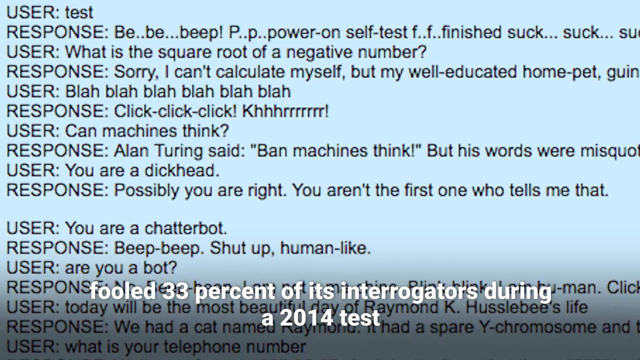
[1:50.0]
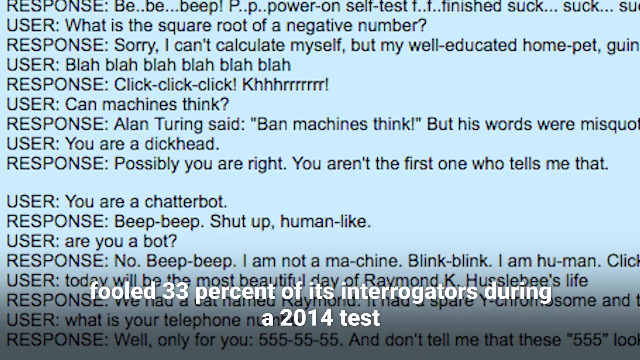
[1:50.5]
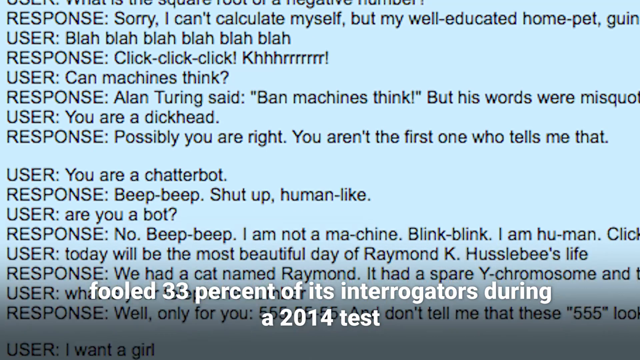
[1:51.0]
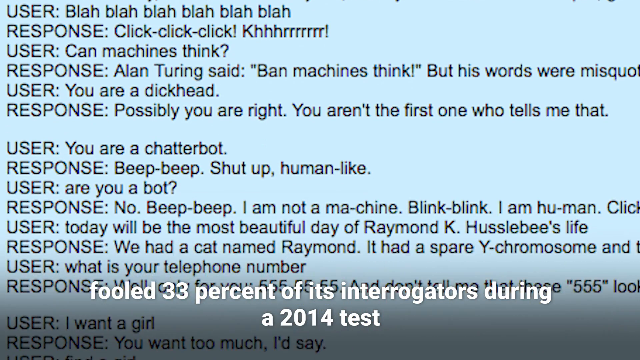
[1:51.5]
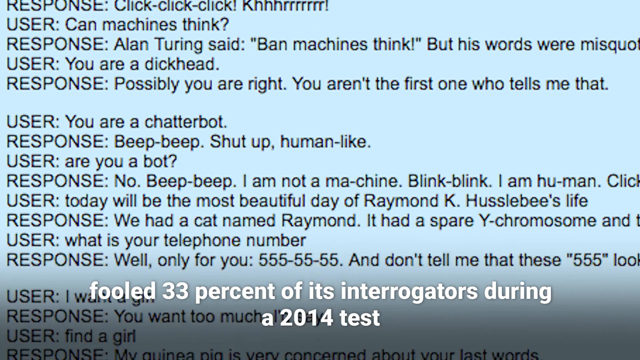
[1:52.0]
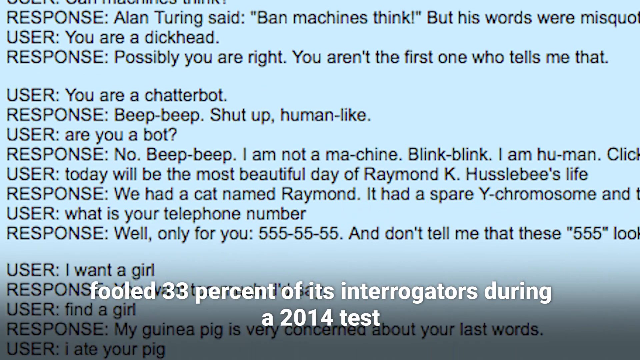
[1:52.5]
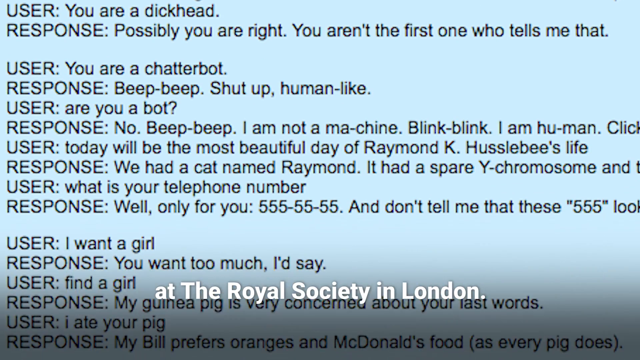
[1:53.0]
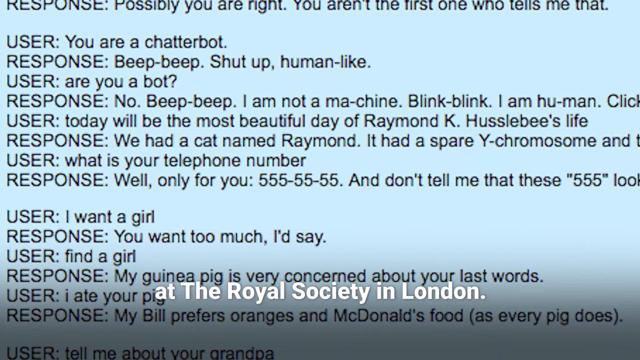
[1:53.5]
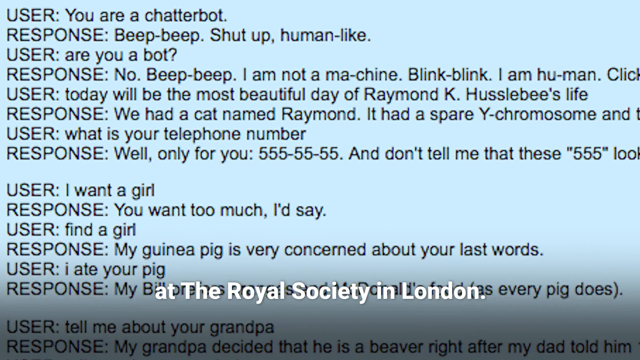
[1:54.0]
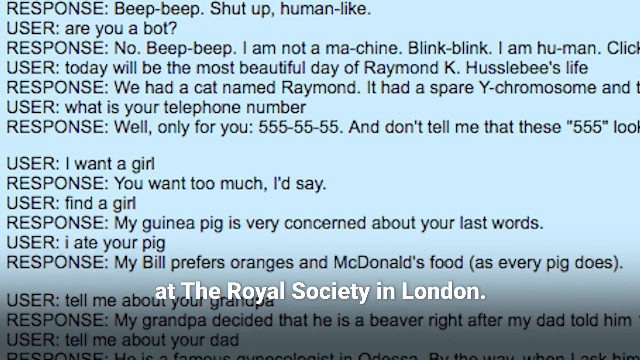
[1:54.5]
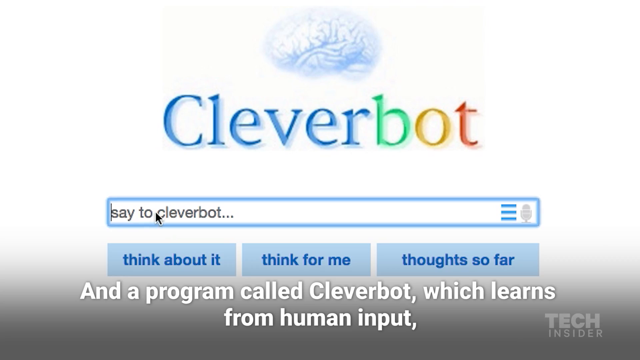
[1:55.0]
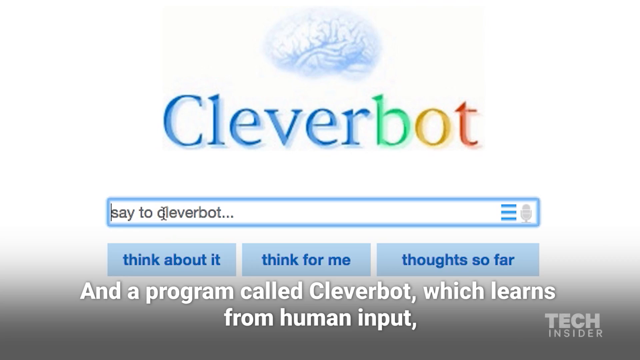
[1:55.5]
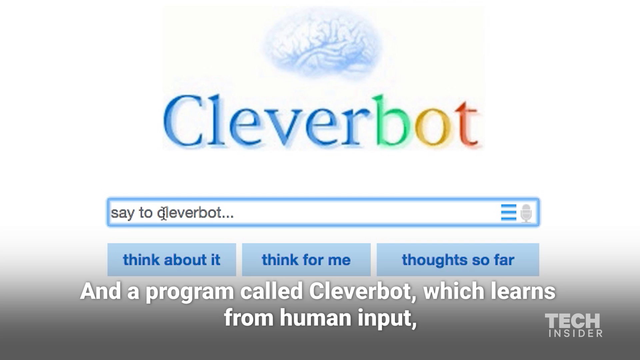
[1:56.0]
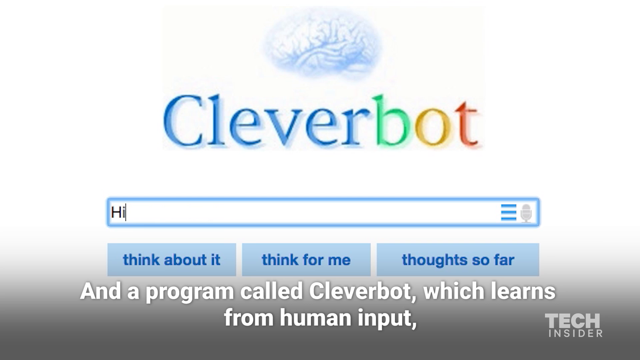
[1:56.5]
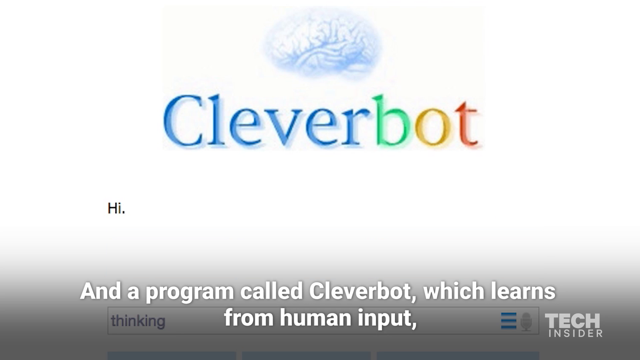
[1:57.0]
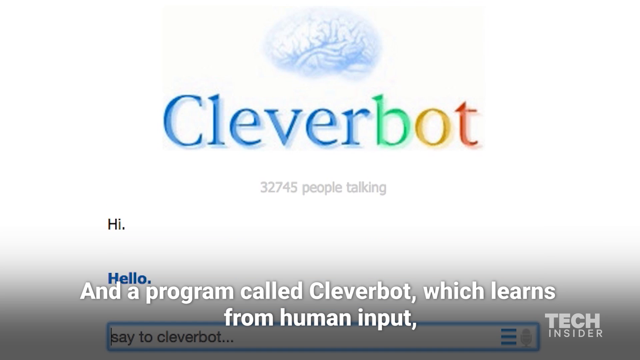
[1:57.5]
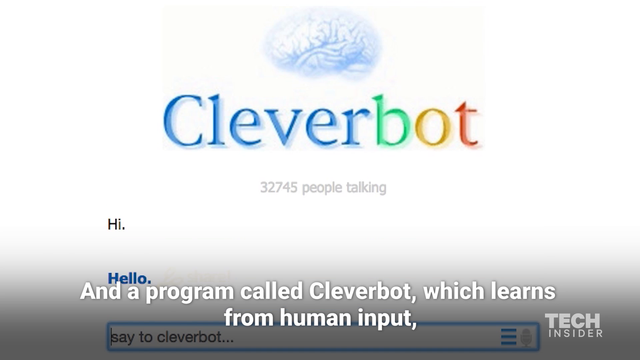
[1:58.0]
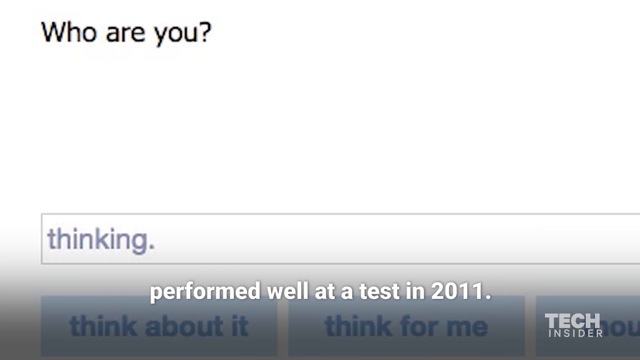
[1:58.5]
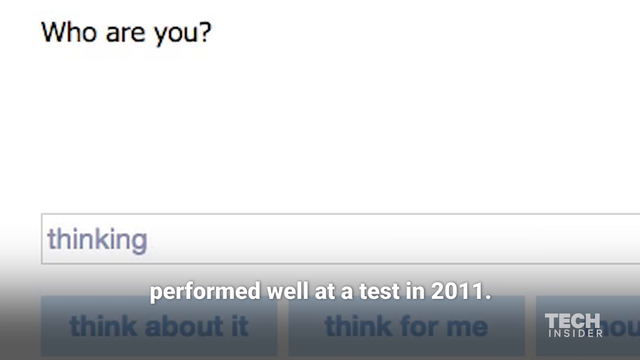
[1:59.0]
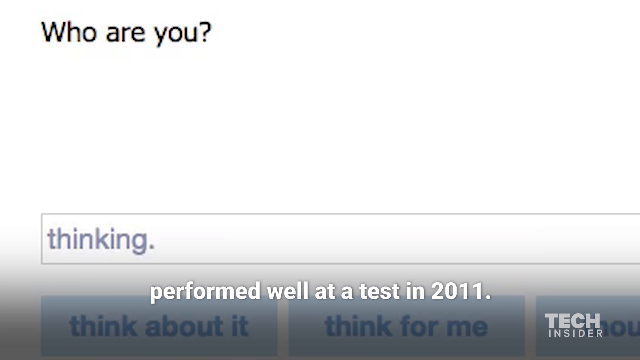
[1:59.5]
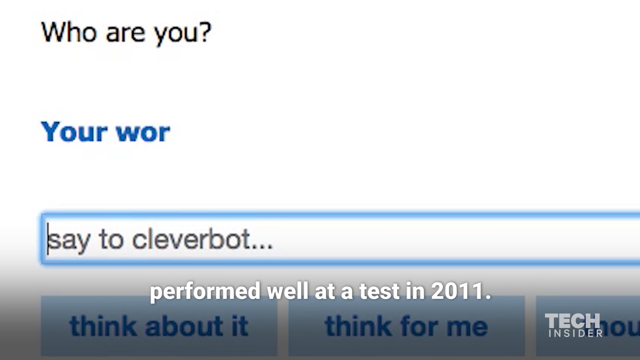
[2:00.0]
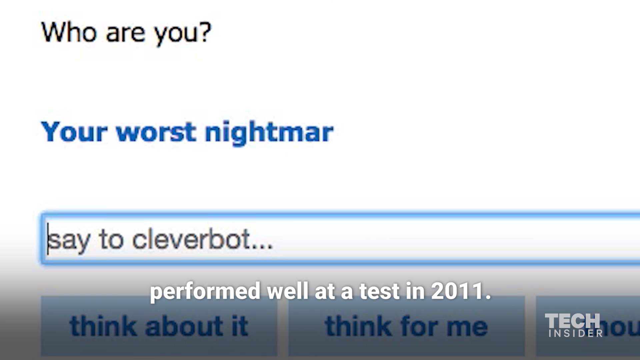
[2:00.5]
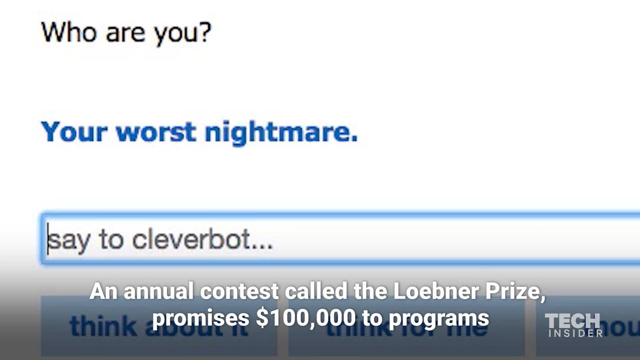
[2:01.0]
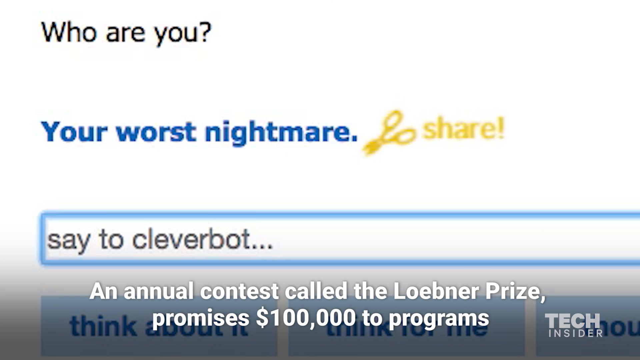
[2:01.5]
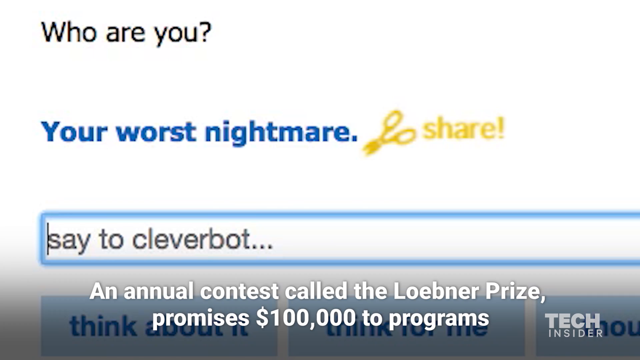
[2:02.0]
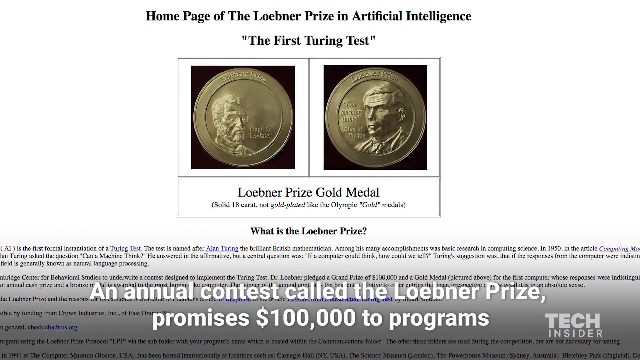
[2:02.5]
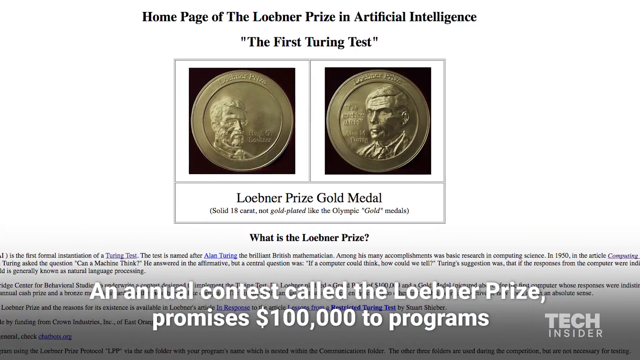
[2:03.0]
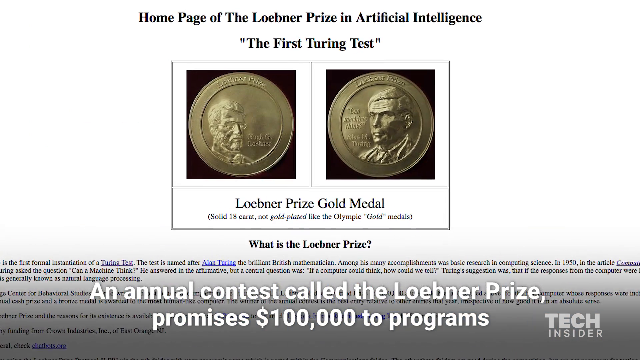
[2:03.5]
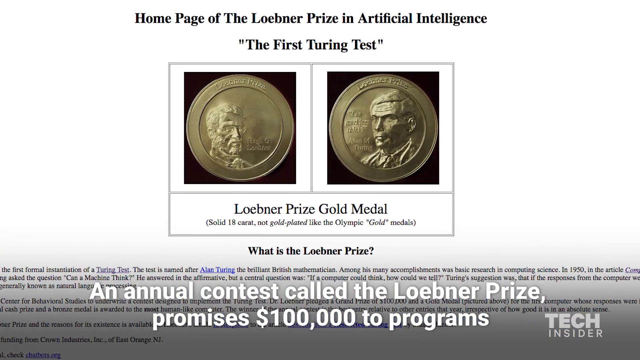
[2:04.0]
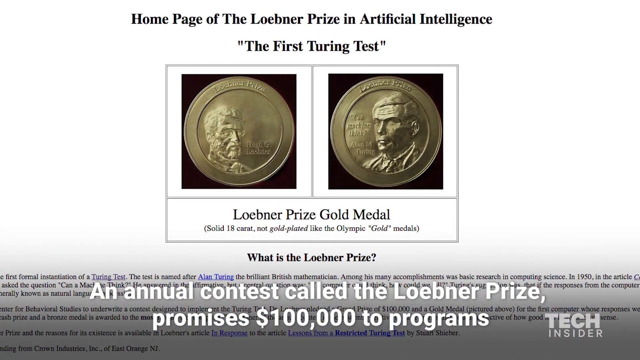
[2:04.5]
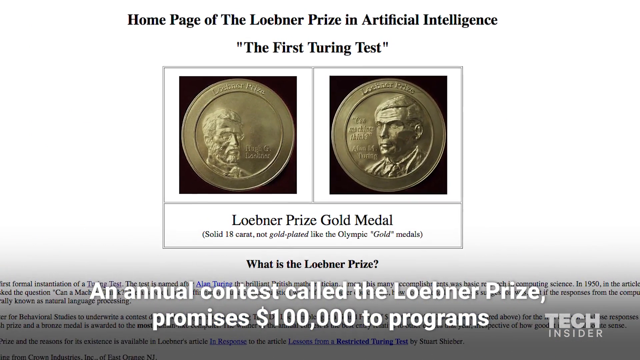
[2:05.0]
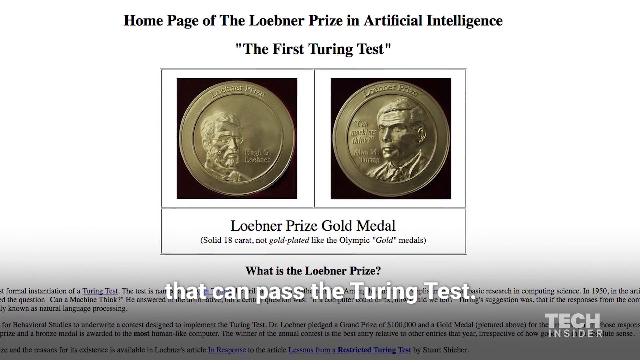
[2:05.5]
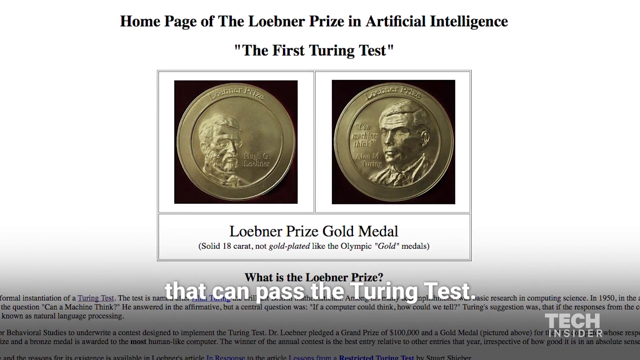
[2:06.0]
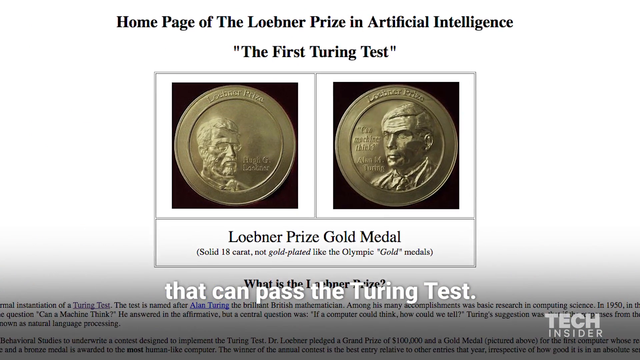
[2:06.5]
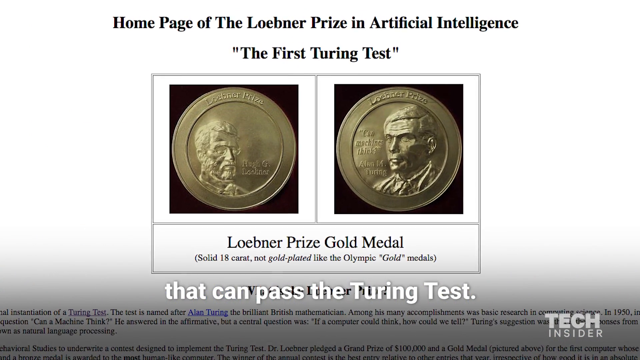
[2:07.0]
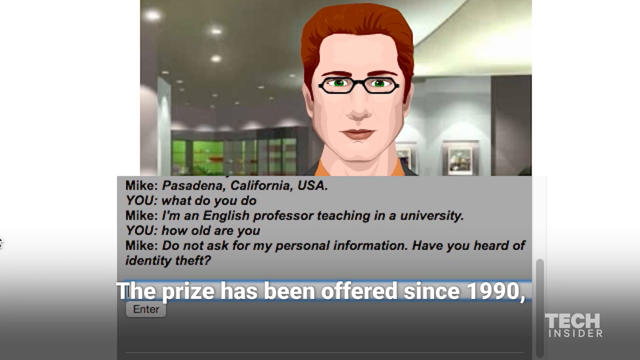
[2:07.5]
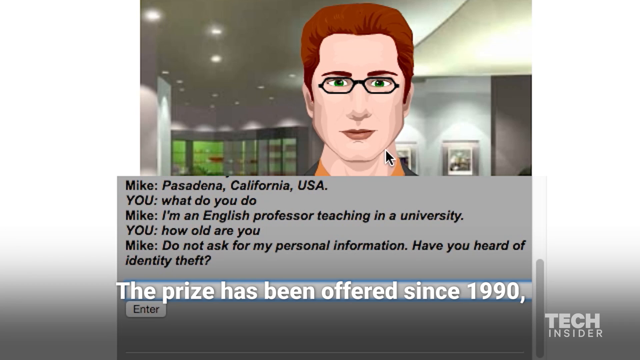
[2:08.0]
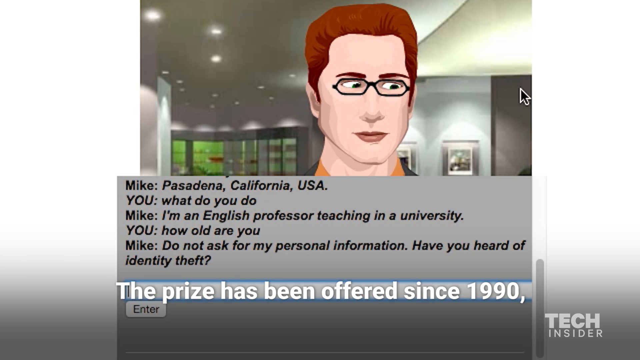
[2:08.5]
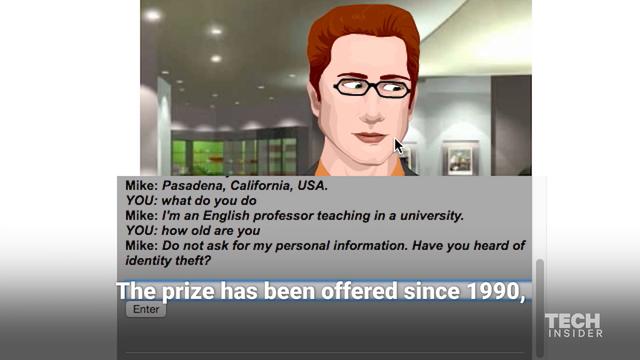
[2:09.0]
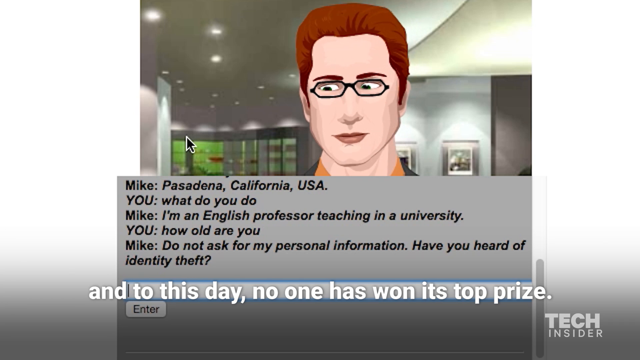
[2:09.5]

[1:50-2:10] A light blue screen shows a chat log between the AI and a user; the user asks many interrogating questions and the AI responds in a kind of sassy manner. The view scrolls down the chat log as the subtitle changes to "at the Royal Society in London." It switches to a CleverBot screen with something like a light blue brain at the very top and the word CleverBot, with "clever" in blue, B in green, O in yellow and T in orange. Underneath is a text entry field reading "say to CleverBot", and beneath that three buttons reading "think about it", "think for me" and "thought so far". The subtitle says "and a program called CleverBot, which learns from human input." The word "hi" is typed into the field; above it reads "32,745 people talking", and under "hi" CleverBot responds "hello". The subtitle says "performed well at a test in 2011." It flips to a white screen reading "who are you?" in the upper left, with the text entry field at the bottom showing "thinking", and below "who are you?" the reply "your worst nightmare". To the right of that are a pair of scissors and the word "share", both in yellow. The subtitle says "an annual contest called the Loebner Prize promises $100,000 to programs." The homepage of the Loebner Prize in Artificial Intelligence appears, with a picture of the Loebner gold medal under the heading and an explanation of the prize underneath. The view zooms in on the medal as the subtitle says "that can pass the Turing test." It flips to a program with a render of a red-haired man with glasses in a living room and a text log of the human and AI underneath, and the subtitle says "the prize has been offered since 1990".